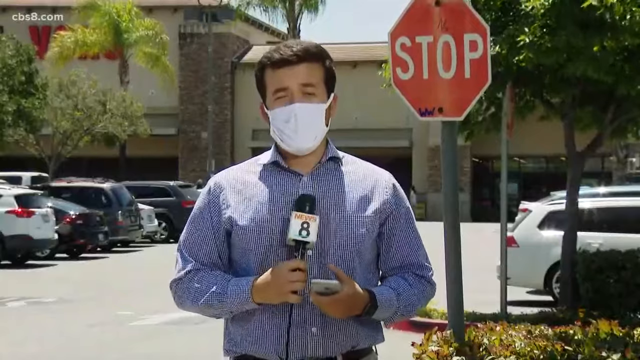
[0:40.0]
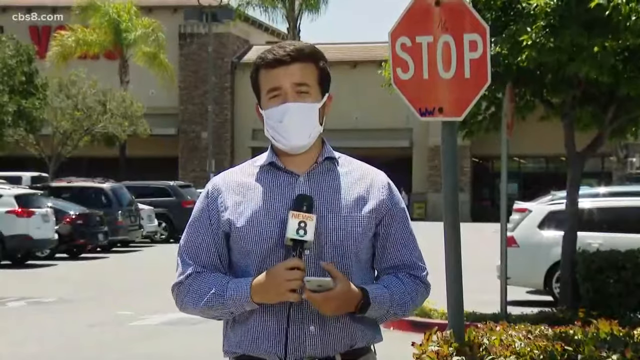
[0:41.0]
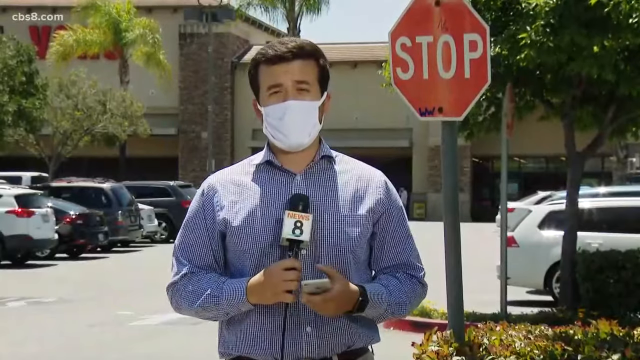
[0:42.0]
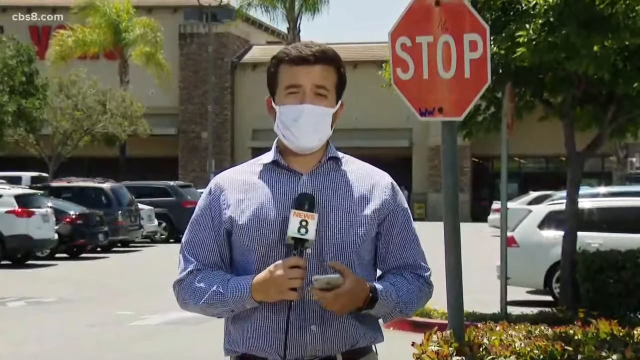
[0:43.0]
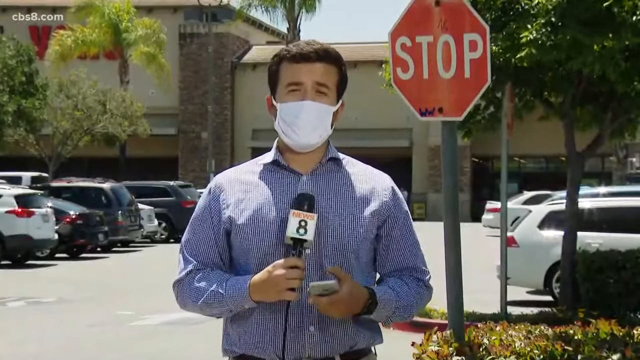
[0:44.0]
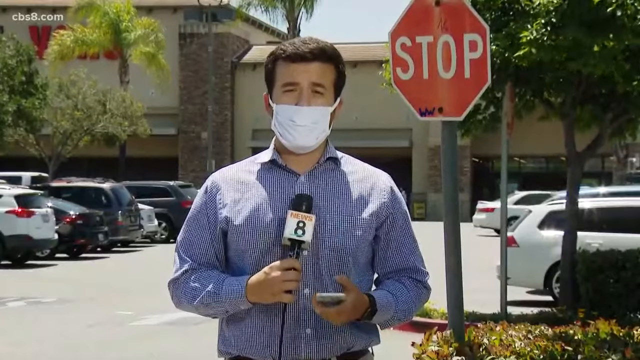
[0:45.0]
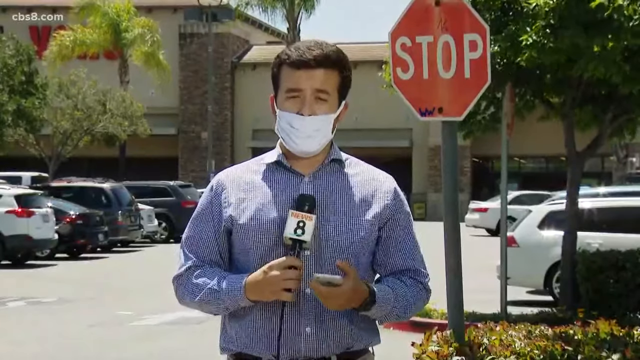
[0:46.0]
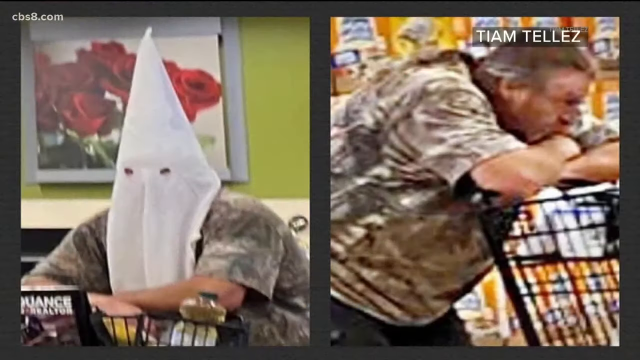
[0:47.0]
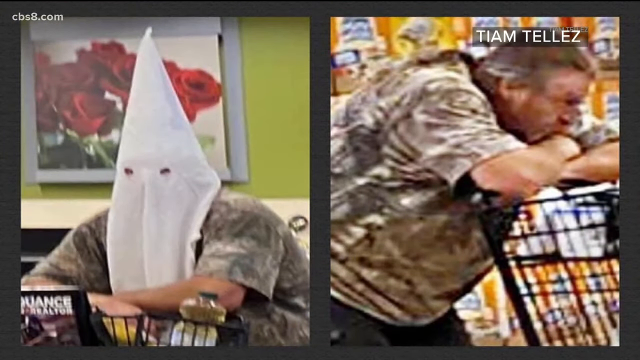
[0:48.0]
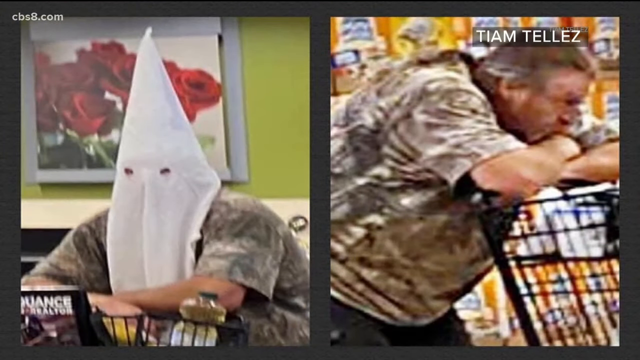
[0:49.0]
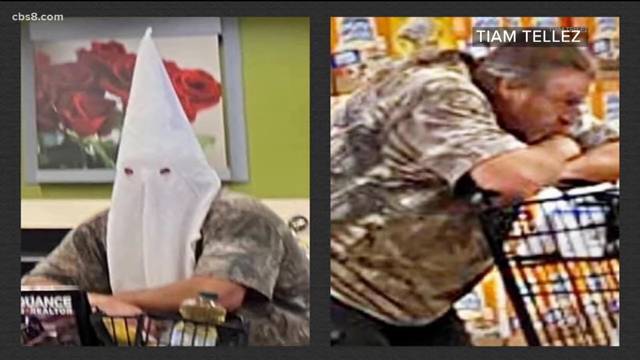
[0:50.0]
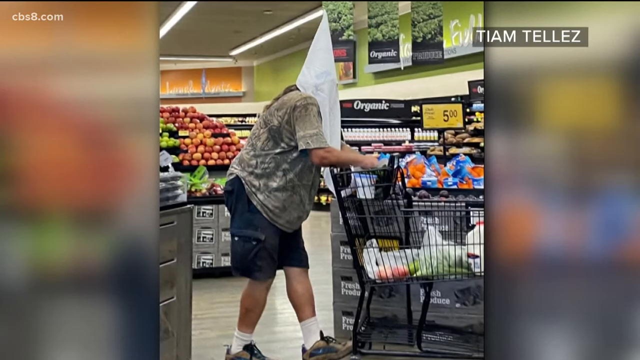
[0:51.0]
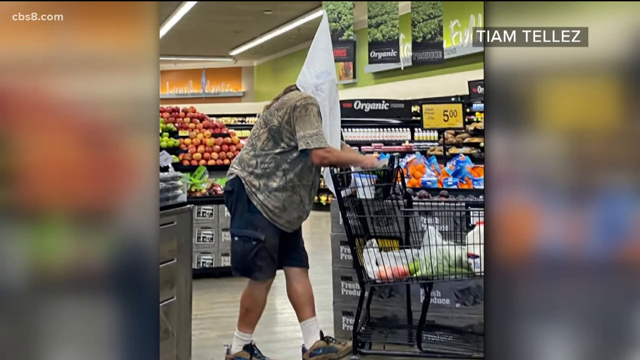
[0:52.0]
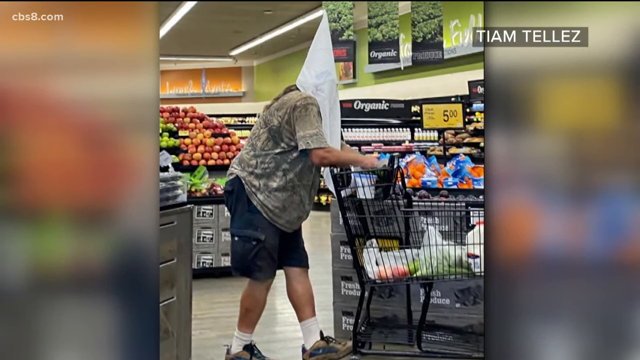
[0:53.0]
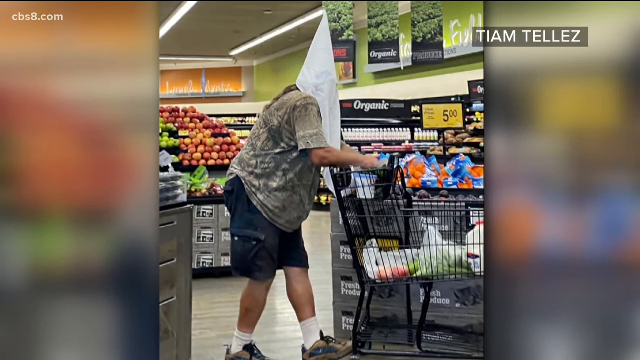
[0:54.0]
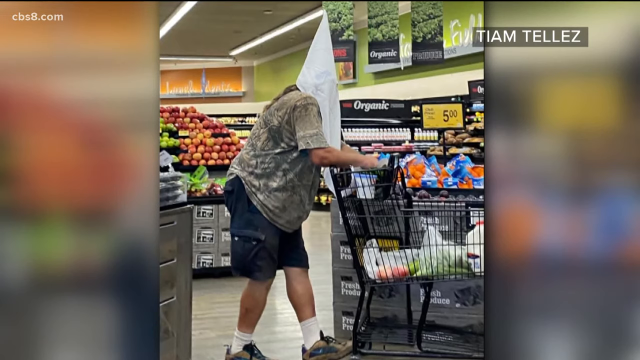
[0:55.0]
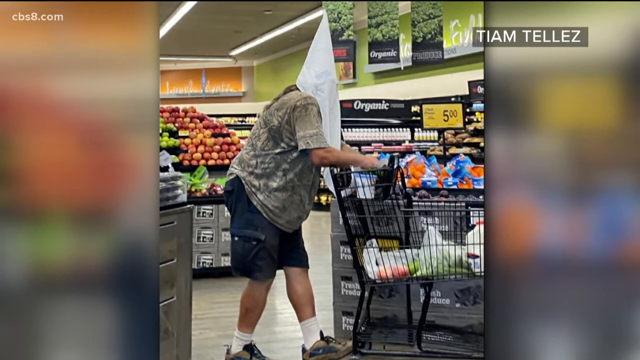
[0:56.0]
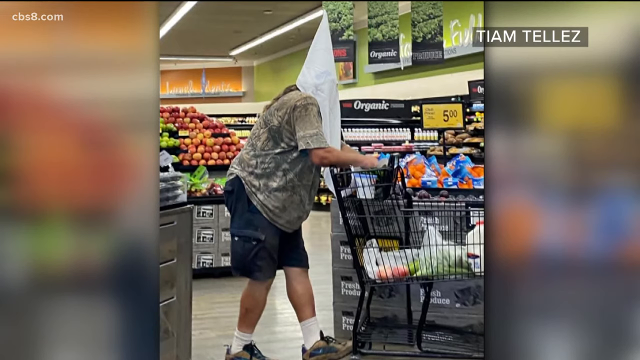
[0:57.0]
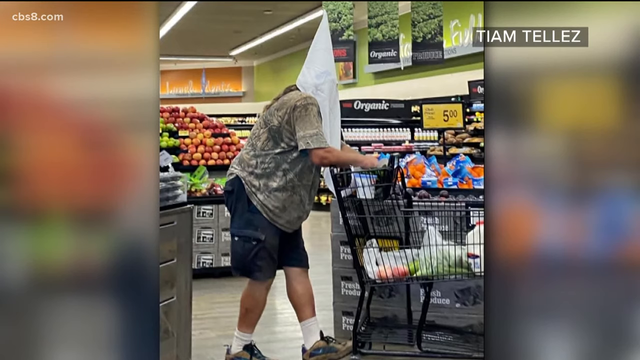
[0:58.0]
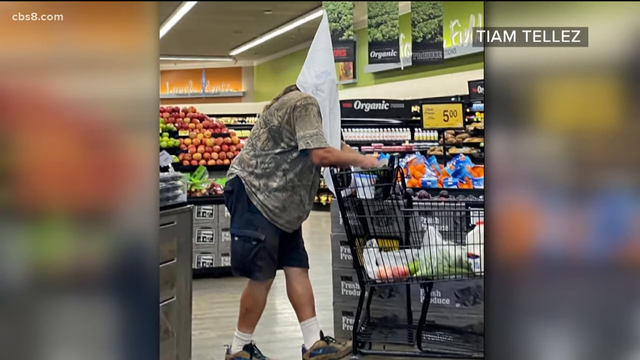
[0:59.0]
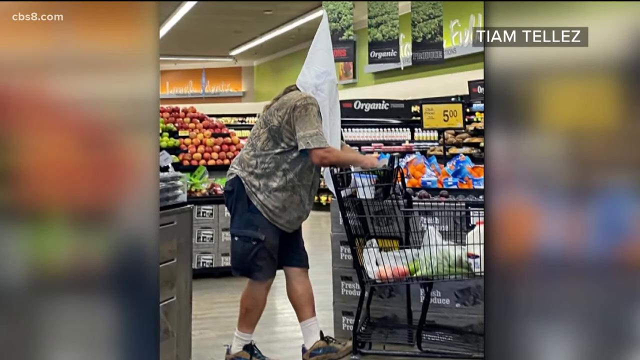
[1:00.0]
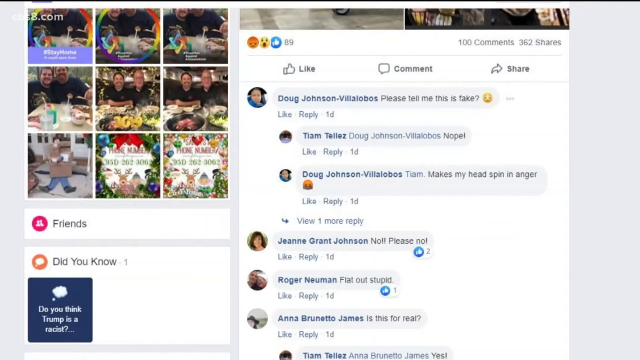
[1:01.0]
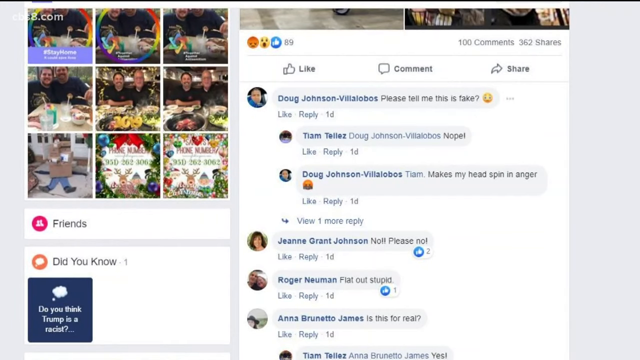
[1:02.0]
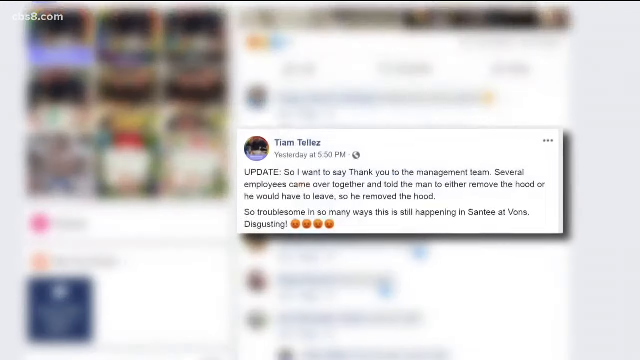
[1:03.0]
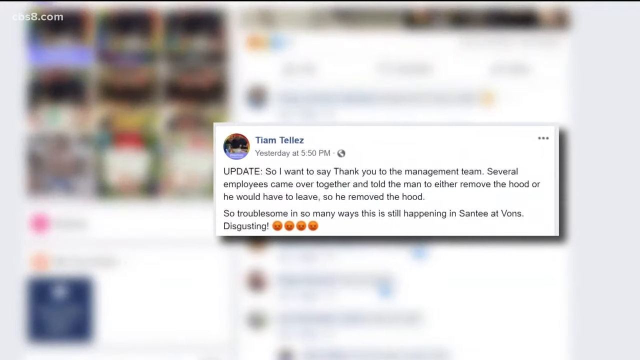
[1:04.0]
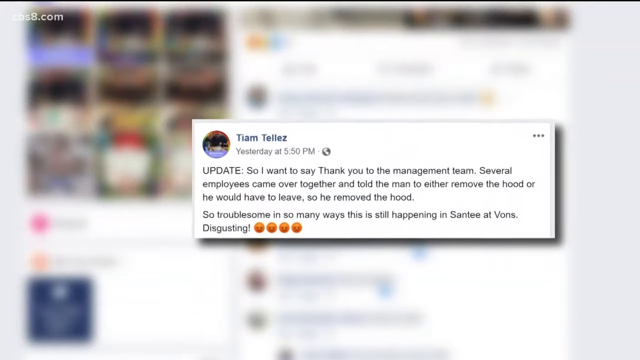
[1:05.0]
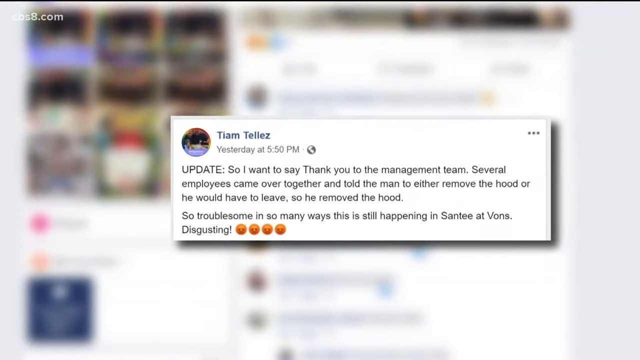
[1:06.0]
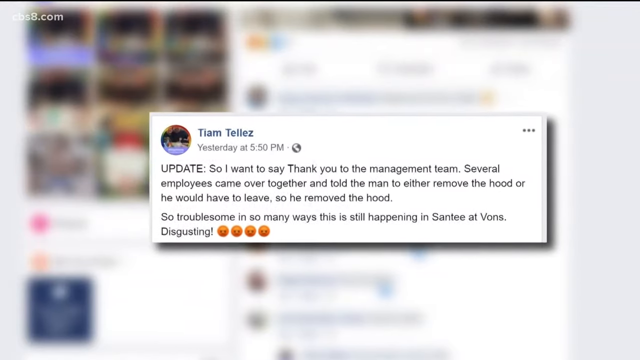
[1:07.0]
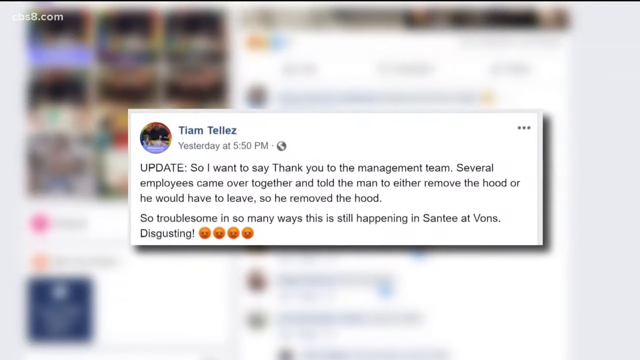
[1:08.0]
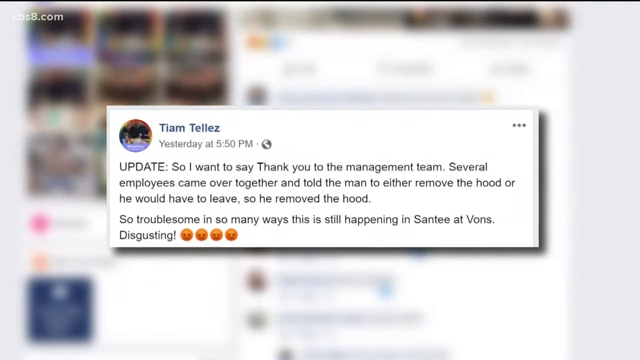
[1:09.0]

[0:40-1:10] A man in a blue shirt stands outside a grocery store, recording for the news channel, with multiple cars in the parking lot. He wears a white mask and looks down at his phone. A split screen then shows the man from before: the left side shows him wearing the KKK hood and the right side shows him without the hood, both shots from different angles with him leaning onto his cart. Next he walks in the grocery store, still in the fruits and vegetables aisle, with multiple items in his cart, including milk. Organic signs are behind him, and a yellow sign says "five dollars". He wears white socks and blue shorts. The video then moves to a Facebook or social media post.